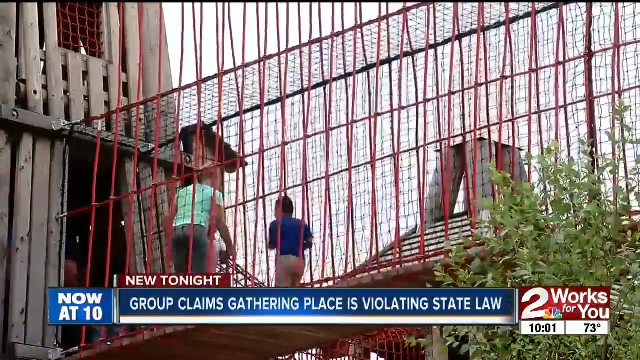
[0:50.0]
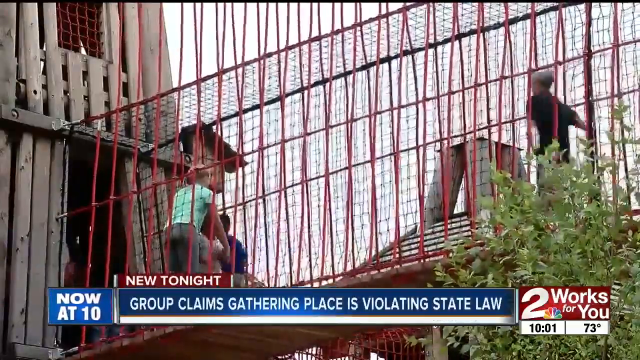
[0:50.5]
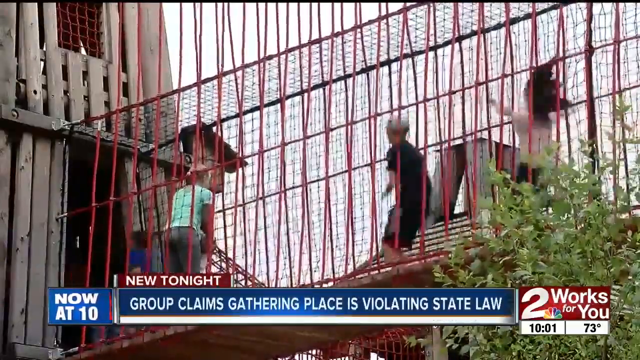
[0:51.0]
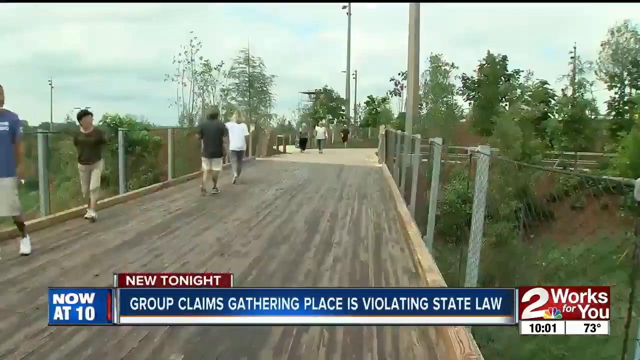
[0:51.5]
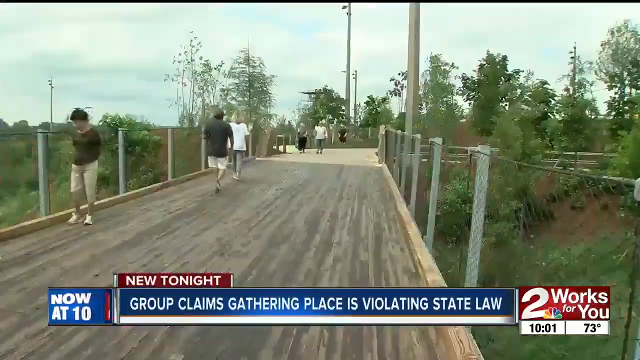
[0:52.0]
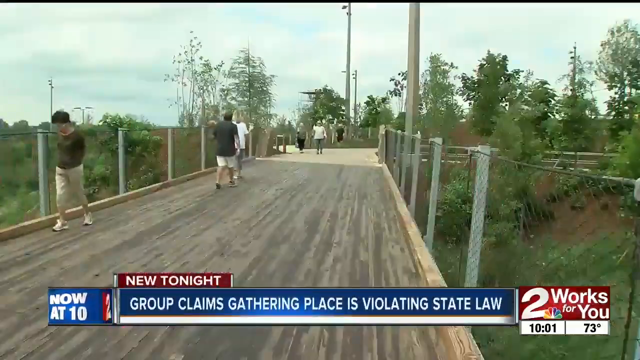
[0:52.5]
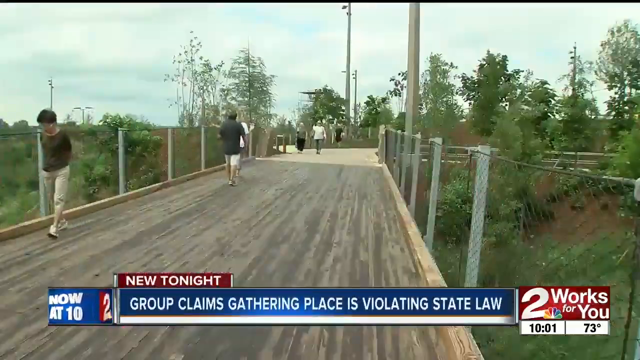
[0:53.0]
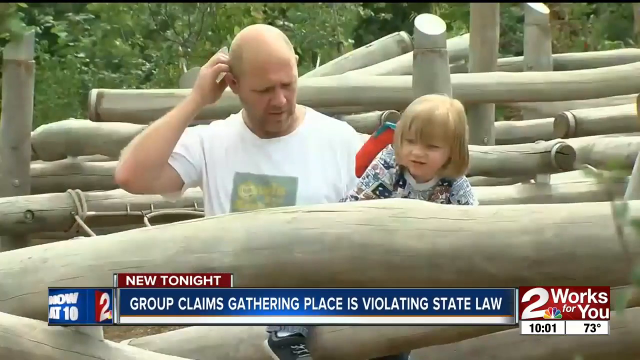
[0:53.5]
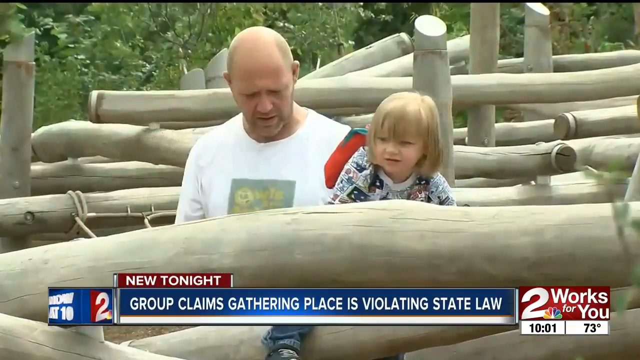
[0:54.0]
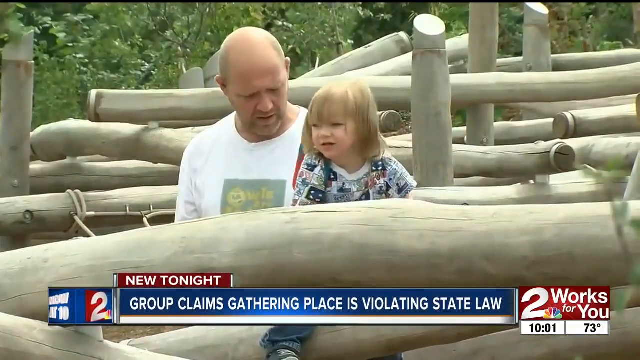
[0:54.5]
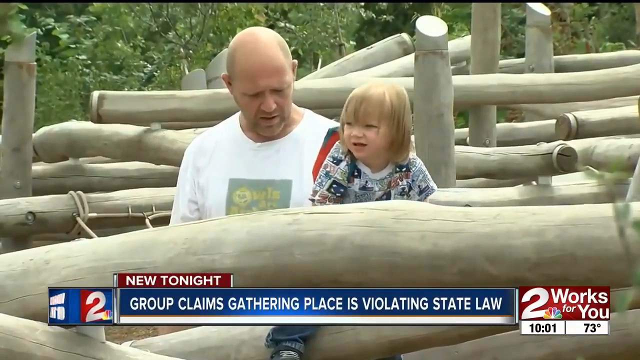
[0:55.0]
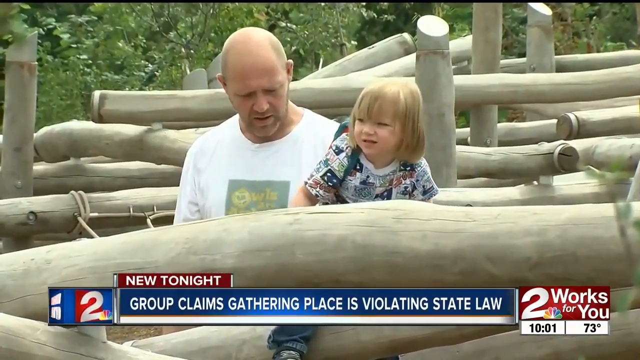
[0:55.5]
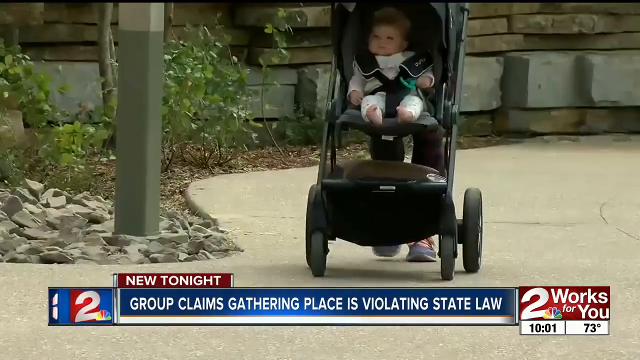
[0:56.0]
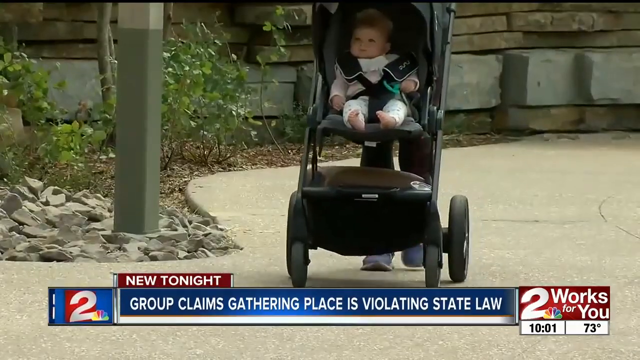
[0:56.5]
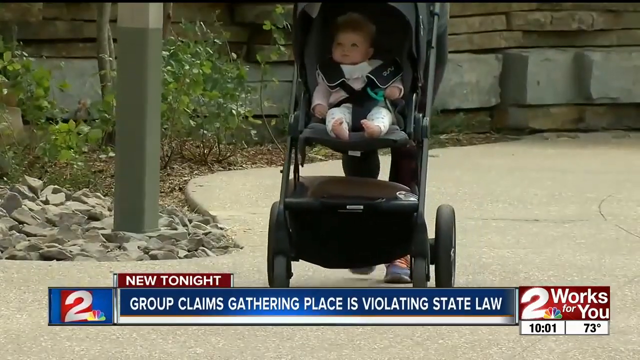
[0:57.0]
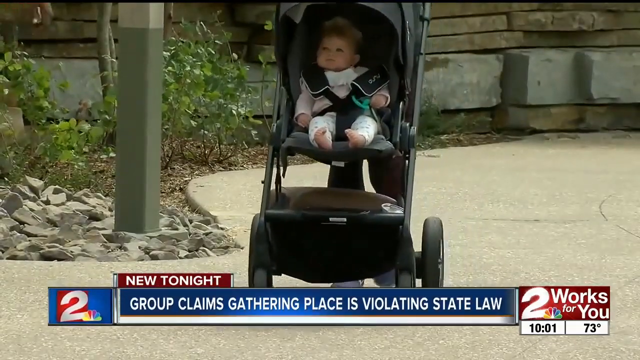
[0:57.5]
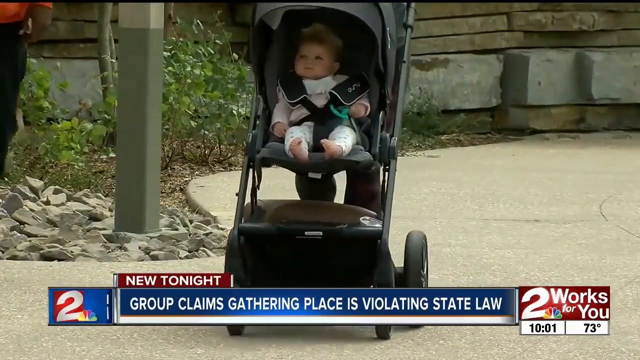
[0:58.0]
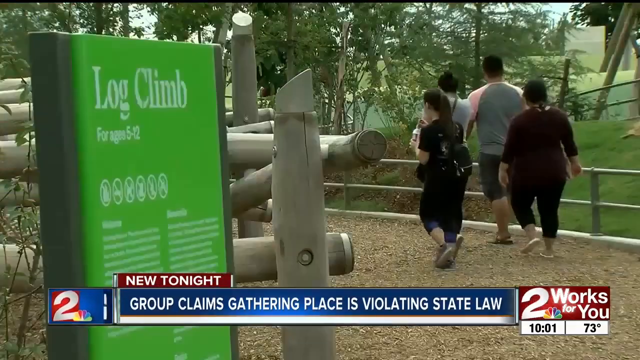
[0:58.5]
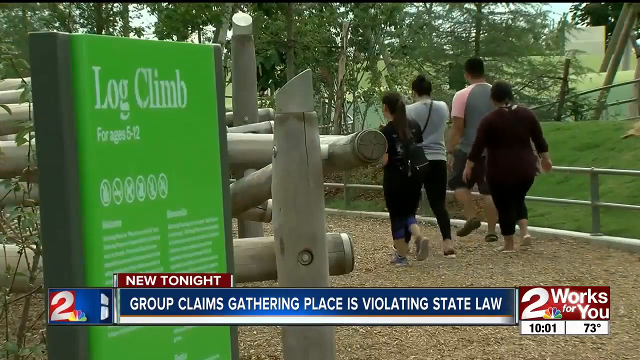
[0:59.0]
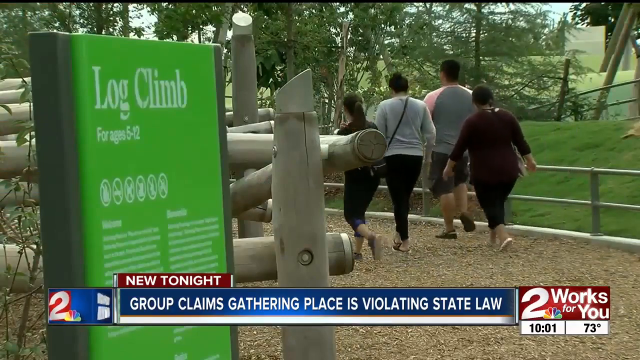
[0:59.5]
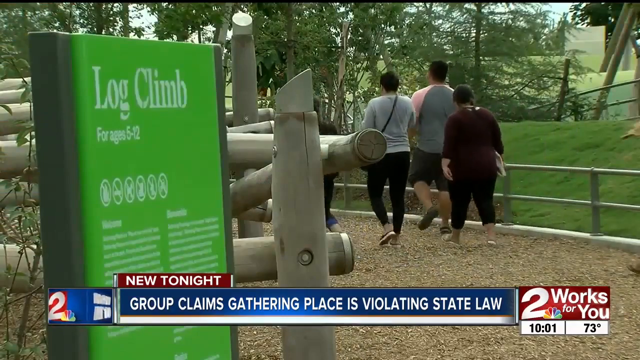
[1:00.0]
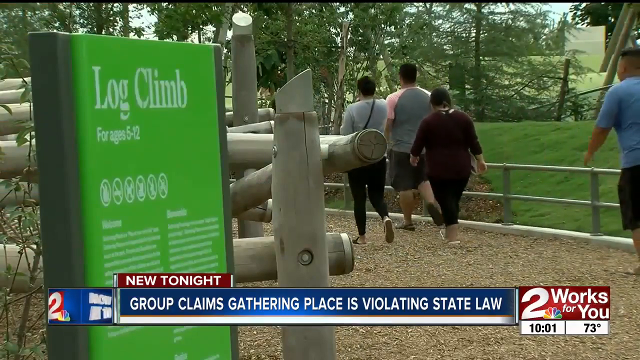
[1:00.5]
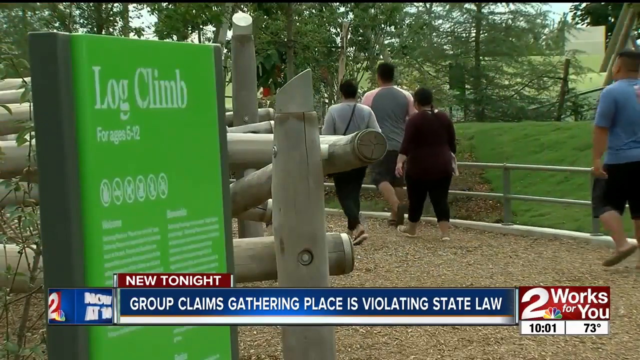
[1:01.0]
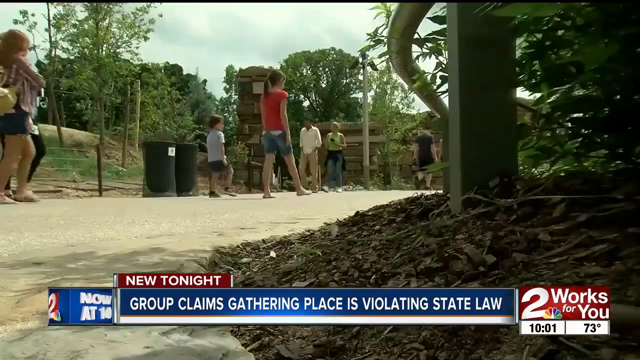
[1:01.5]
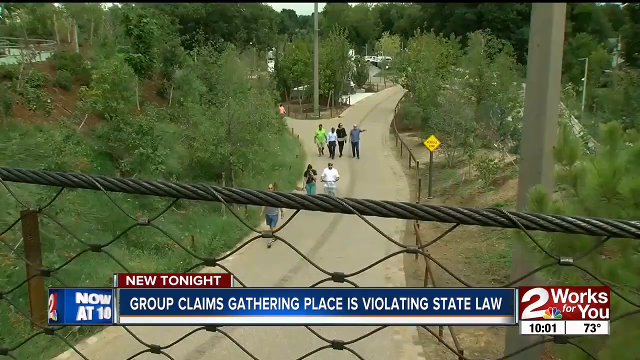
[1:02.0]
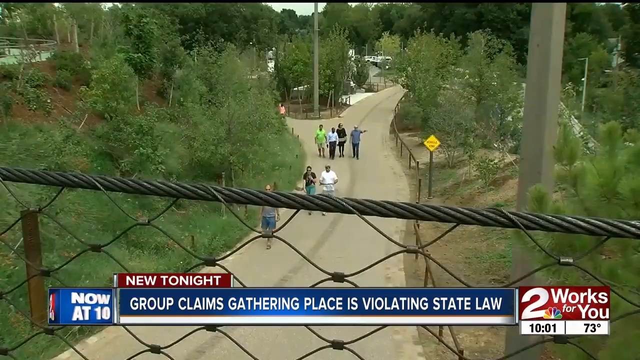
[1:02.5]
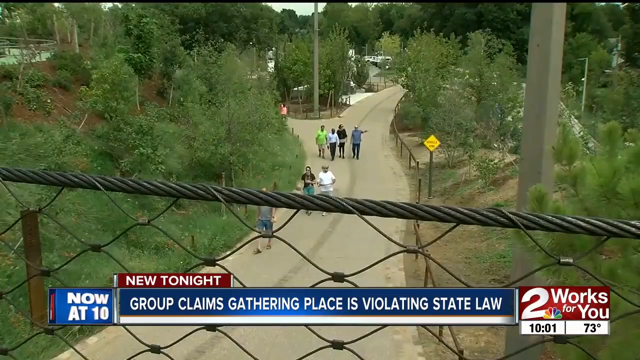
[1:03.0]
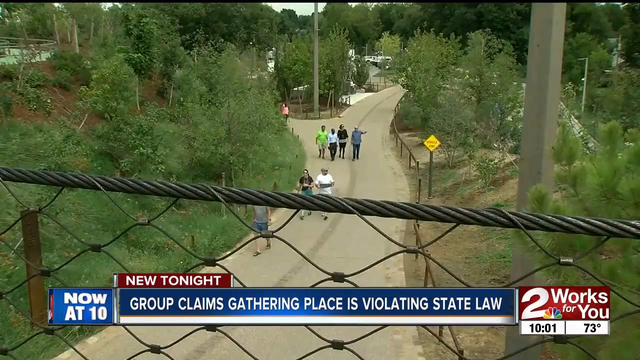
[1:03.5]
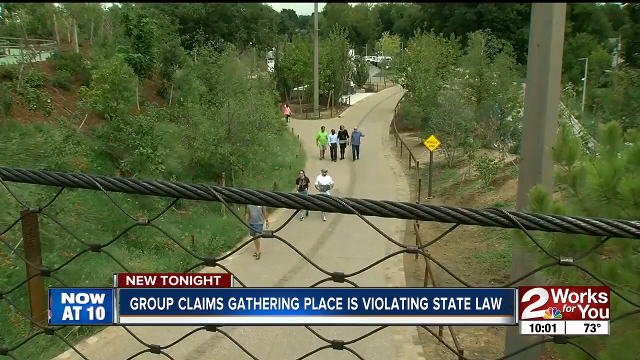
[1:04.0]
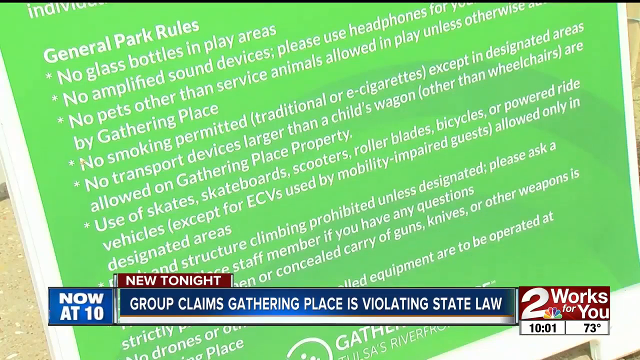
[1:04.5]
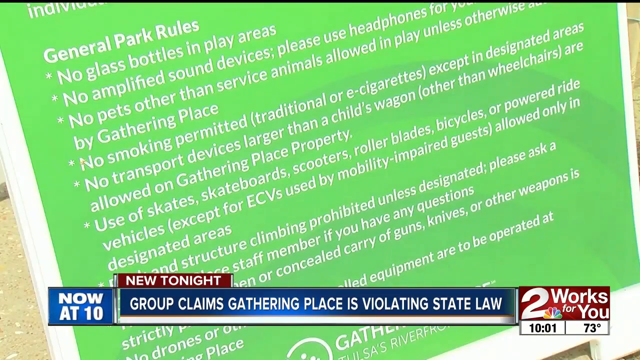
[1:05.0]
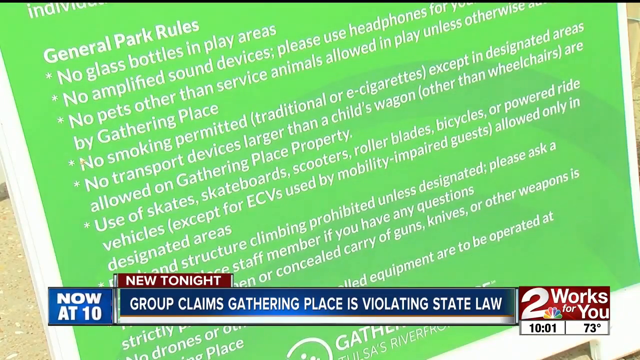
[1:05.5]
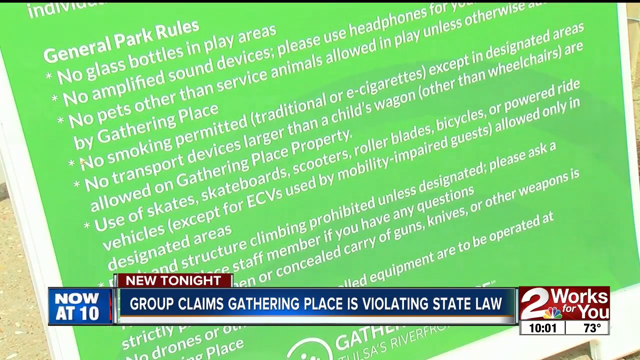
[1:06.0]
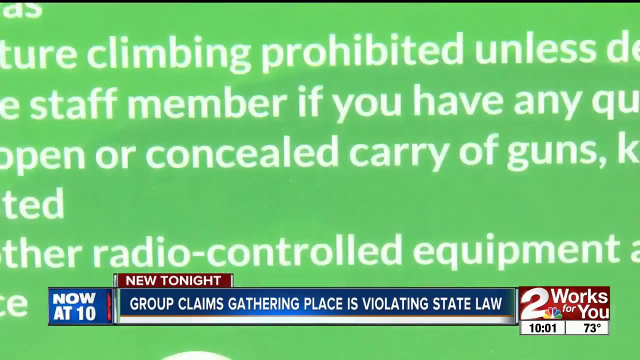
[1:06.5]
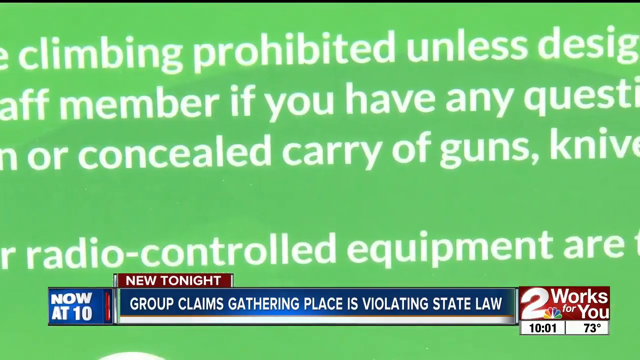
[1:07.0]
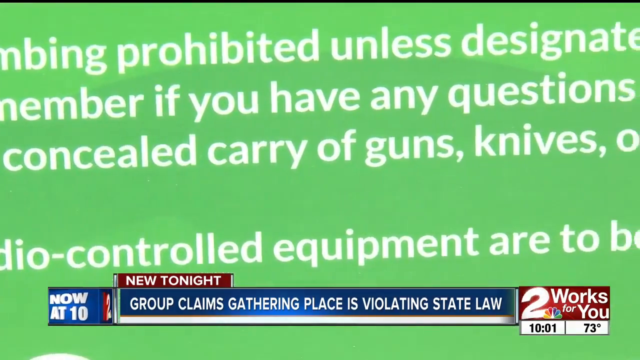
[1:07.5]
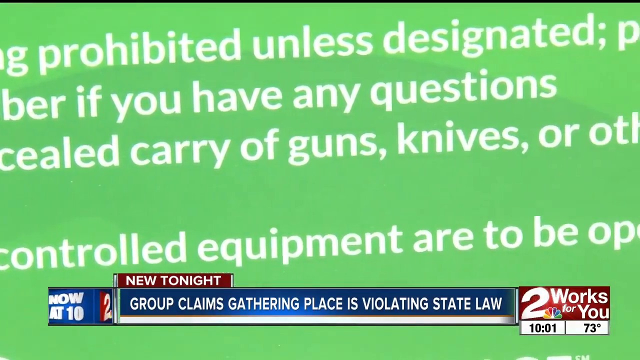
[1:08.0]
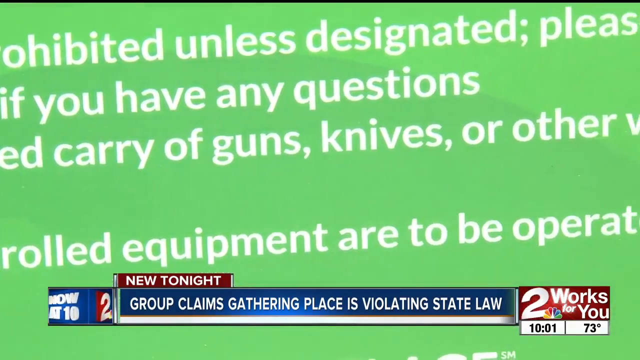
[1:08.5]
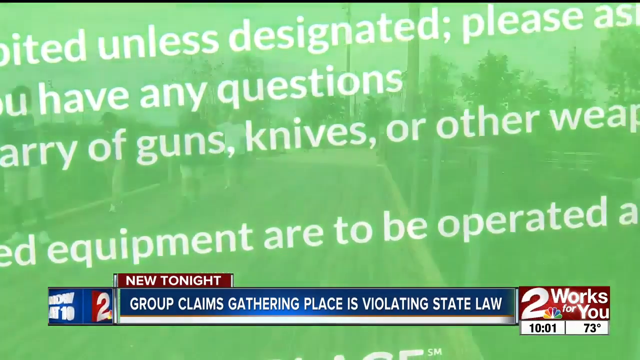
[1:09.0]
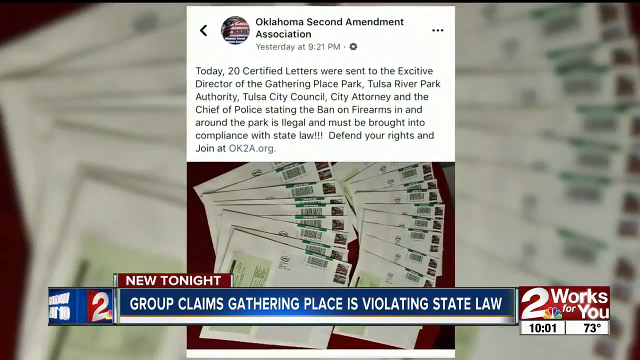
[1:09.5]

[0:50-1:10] A red bridge set made of wood has a few children running around it. A crowd of people walks around with their children, and many children run around the bridge set. The video switches to another bridge with people crossing it; the bridge appears to be in the middle of trees. A father wearing a white shirt is with his daughter on some rocks and some more wood. A woman walks with a baby in a black stroller. A few individuals walk around what looks like a log climb.